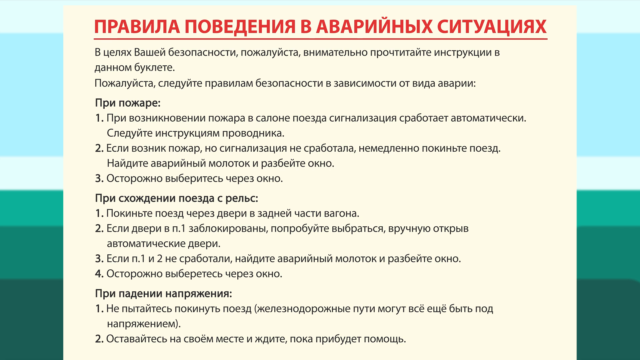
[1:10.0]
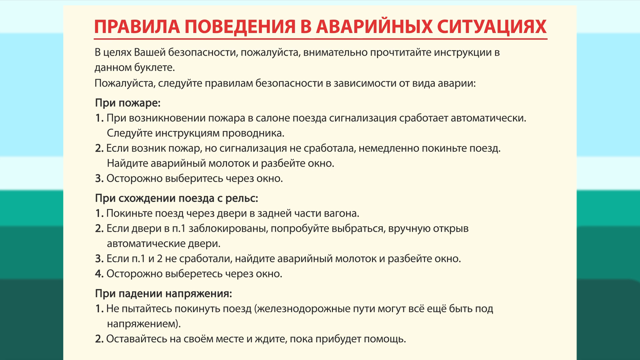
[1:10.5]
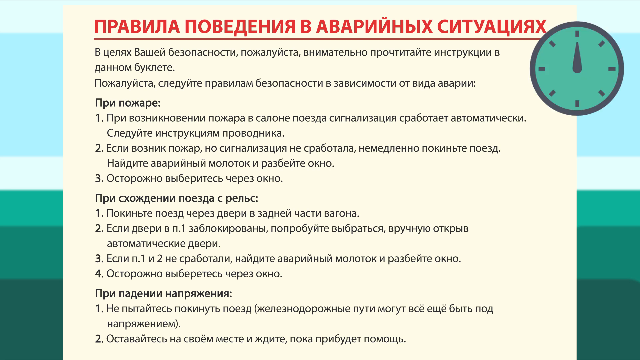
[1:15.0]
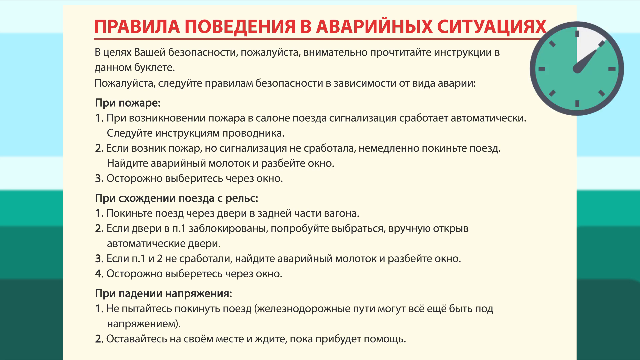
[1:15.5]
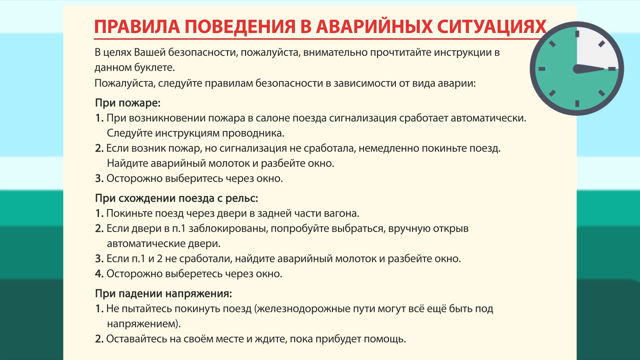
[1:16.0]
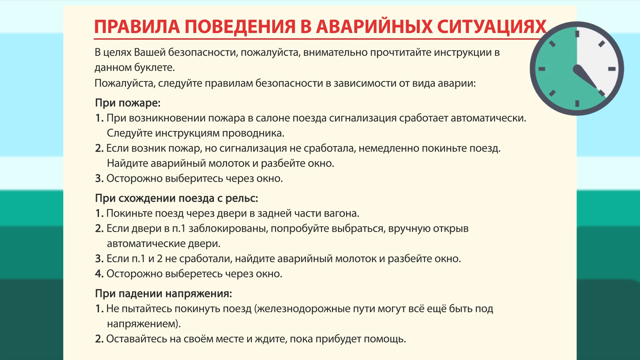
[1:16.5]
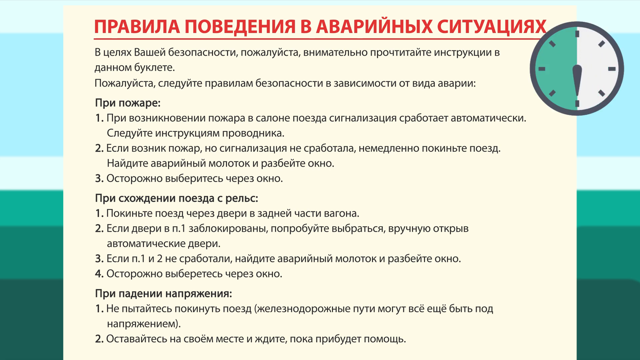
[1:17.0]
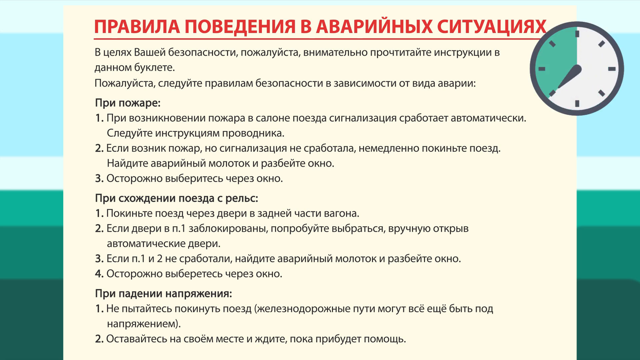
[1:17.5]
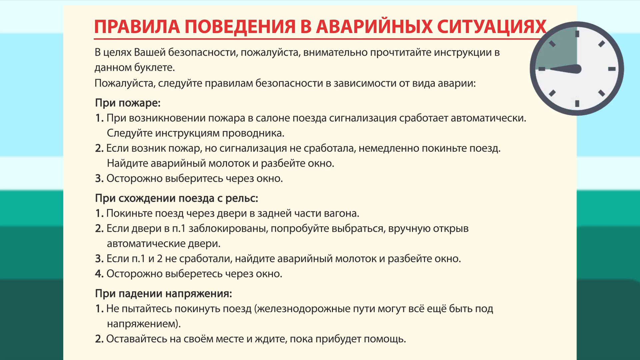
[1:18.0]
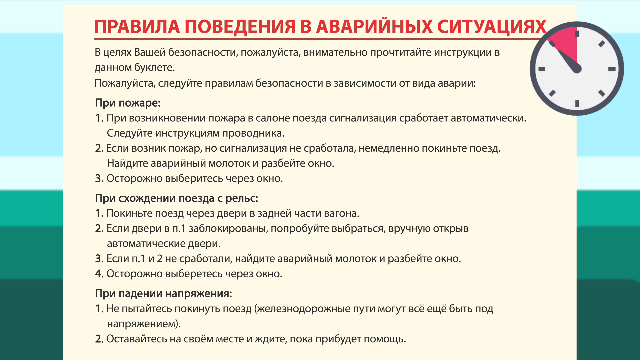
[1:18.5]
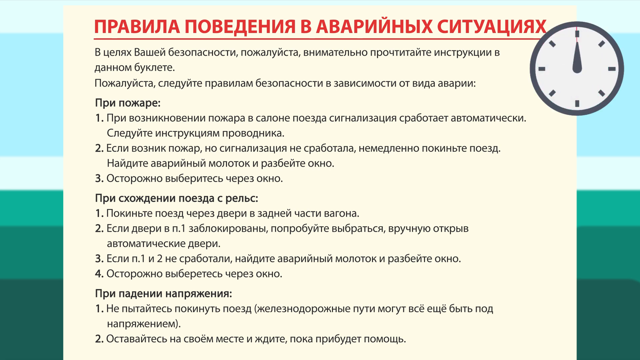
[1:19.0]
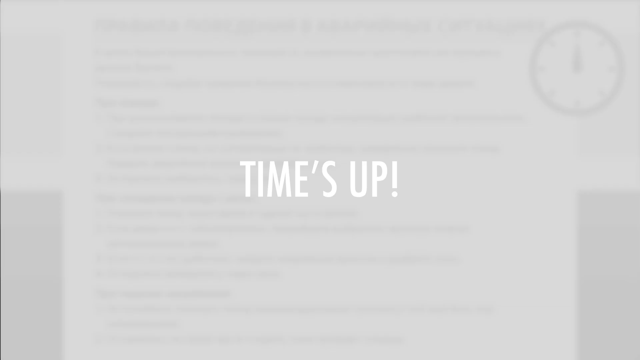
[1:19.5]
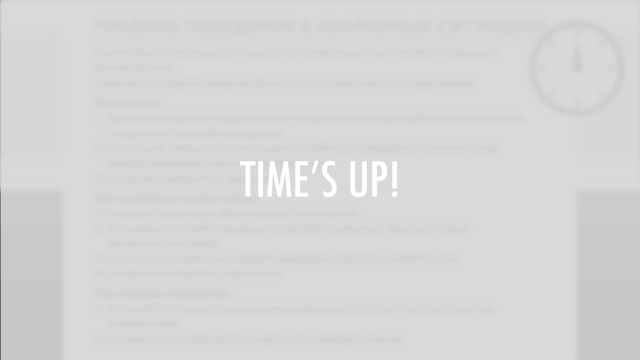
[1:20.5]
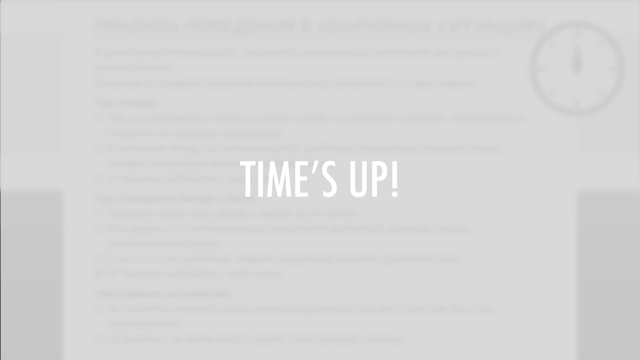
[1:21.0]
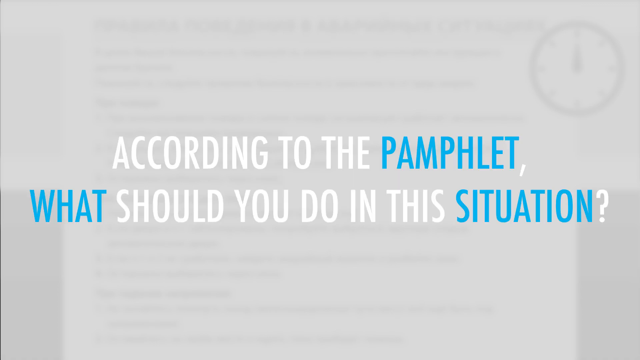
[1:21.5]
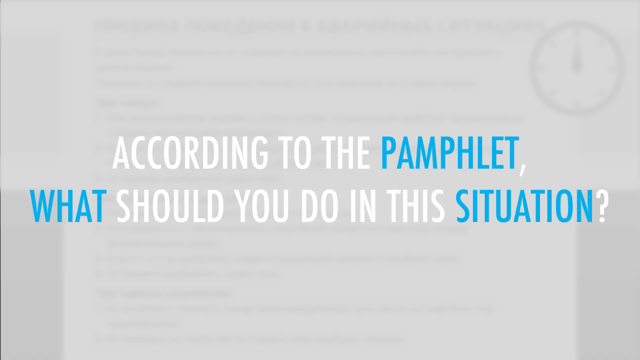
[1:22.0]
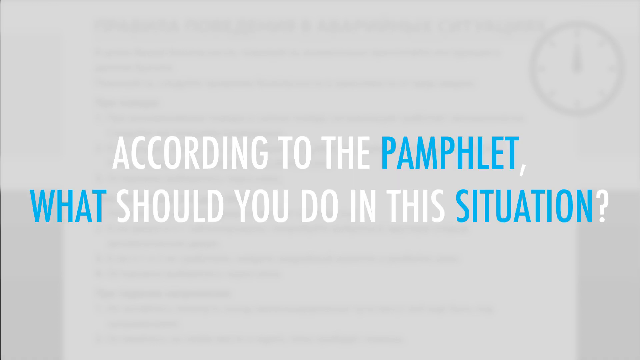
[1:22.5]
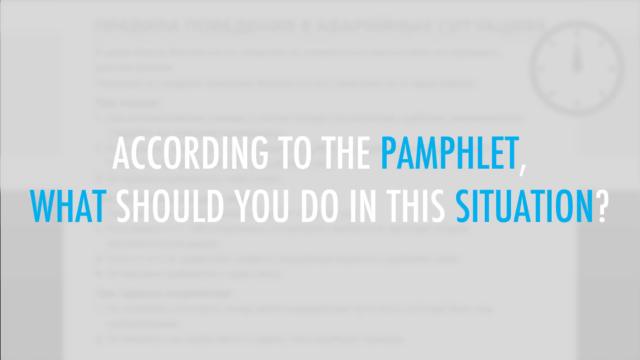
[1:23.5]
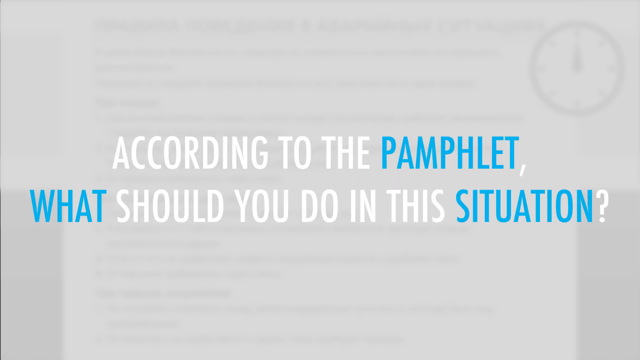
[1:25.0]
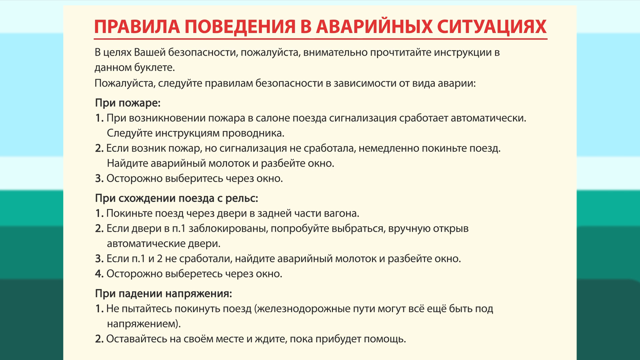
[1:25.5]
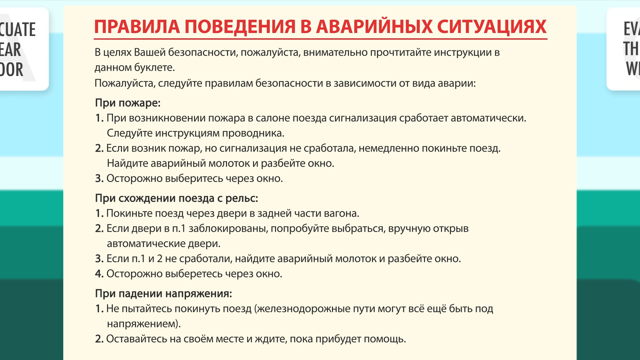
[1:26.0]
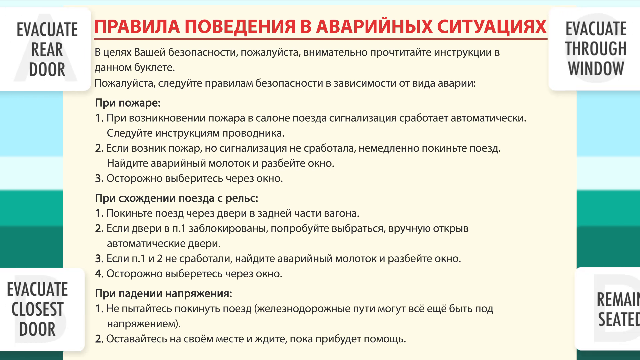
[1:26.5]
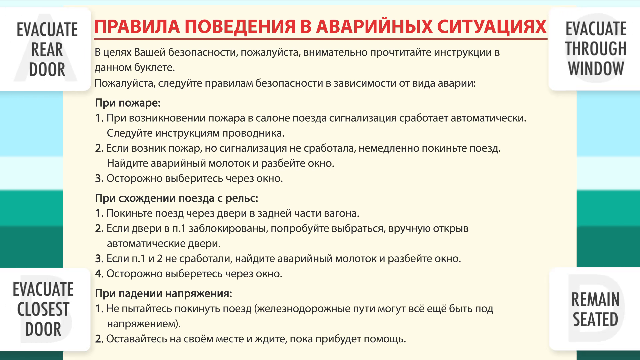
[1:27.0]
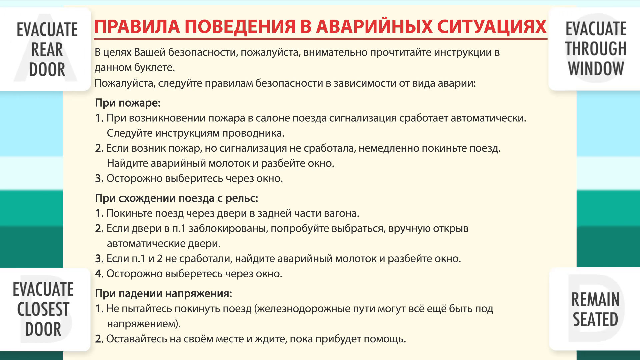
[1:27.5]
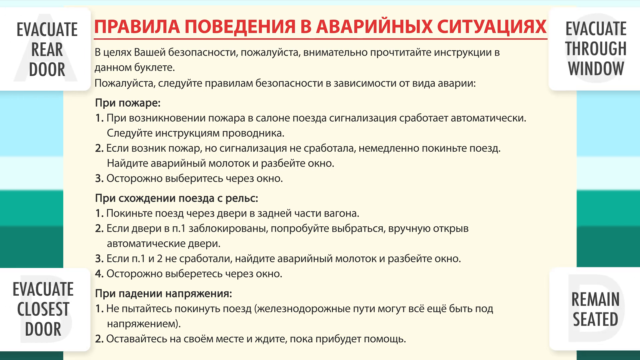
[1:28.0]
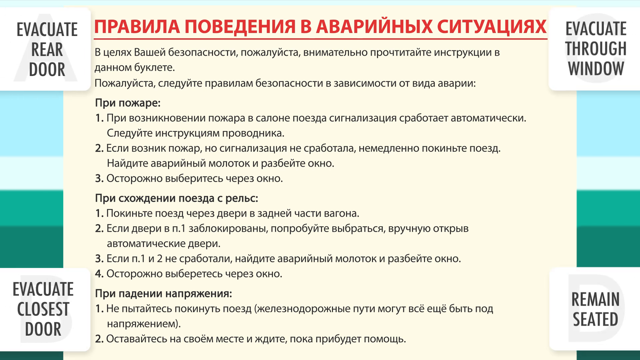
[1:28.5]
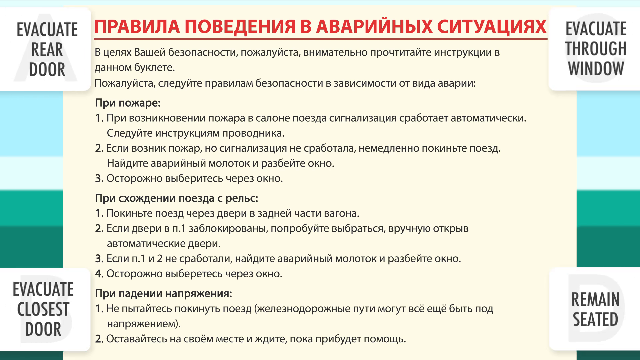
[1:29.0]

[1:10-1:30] The heading of the page is written in red and underlined with a red line. A passage underneath the heading is an explanation. There are three subheadings within the text: the first has three options, the second has four points, and the last has two points. The background is a shift of different colors: a light turquoise band of small width, a turquoise band of much larger width, a light turquoise band the same width as the first, a much darker turquoise band the same width as the third, a darker turquoise band wider than the third but narrower than the second, and a dark turquoise band the same width as the second. A clock appears above the page at the top right of the screen, counting down a period of time. It starts colored turquoise, and when only a fourth of the time remains it changes to red as the time runs out. When the time runs out, a pop-up appears in front of a green box; it has a gray background with white text that says "times up!" The question "according to the pamphlet, what should you do in this situation" then returns above a gray background. The video then transitions back to the form, now with English writing on all four corners of the page.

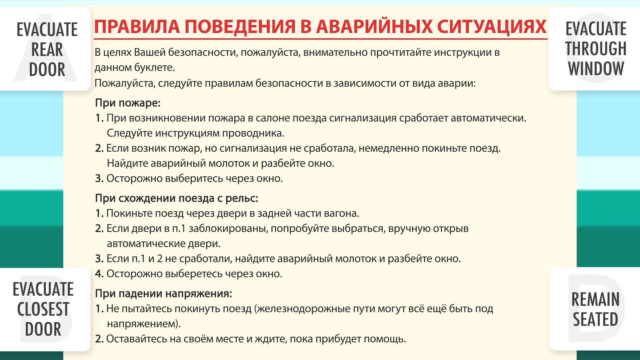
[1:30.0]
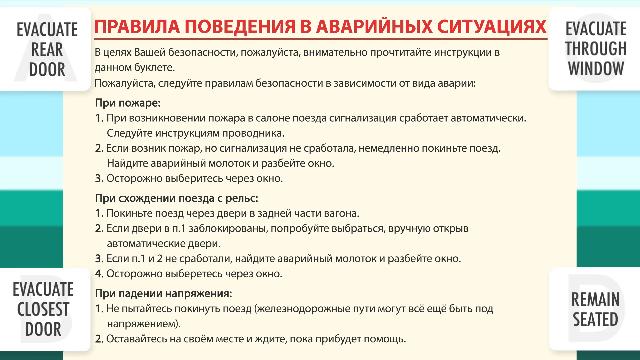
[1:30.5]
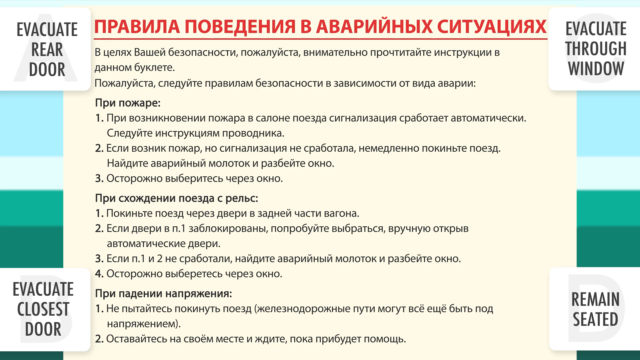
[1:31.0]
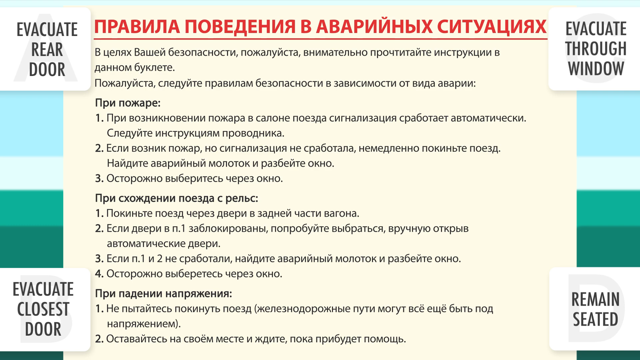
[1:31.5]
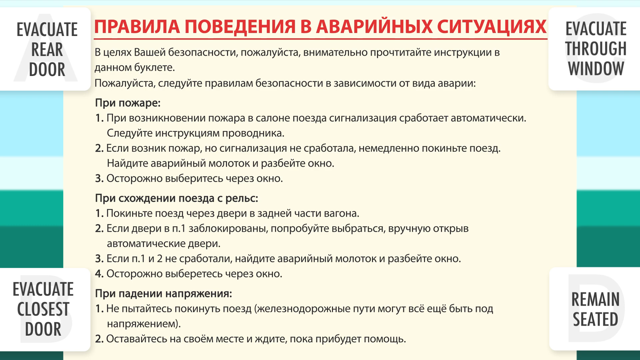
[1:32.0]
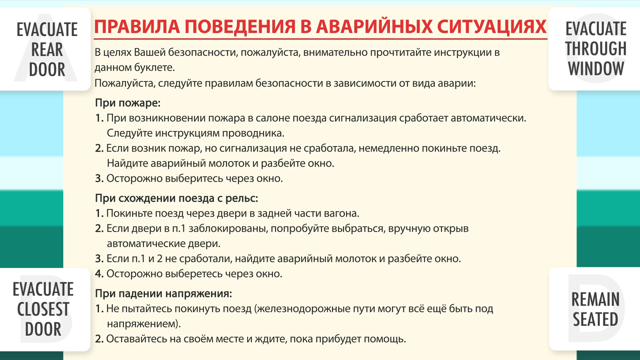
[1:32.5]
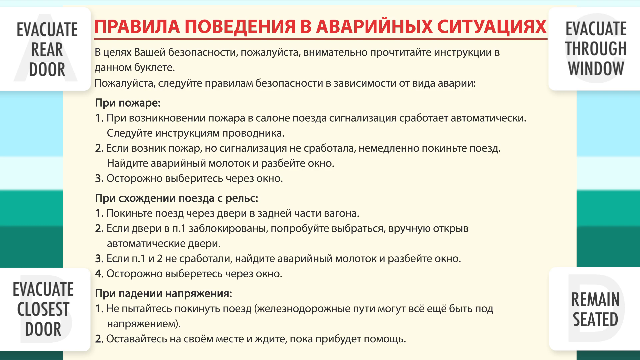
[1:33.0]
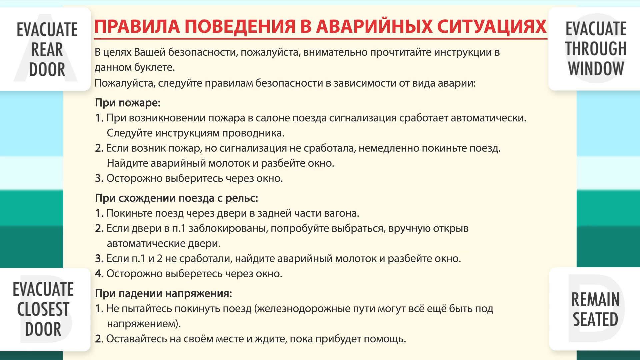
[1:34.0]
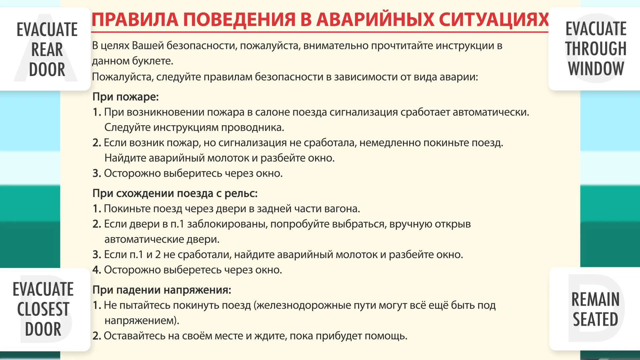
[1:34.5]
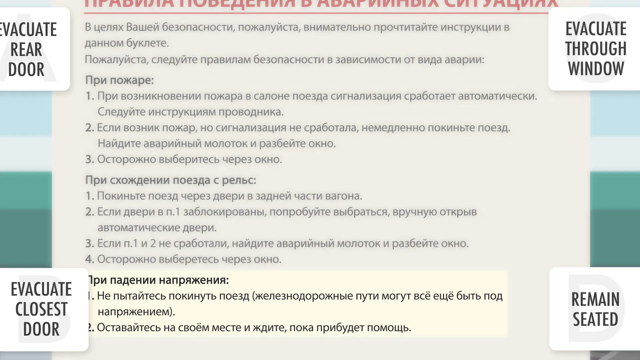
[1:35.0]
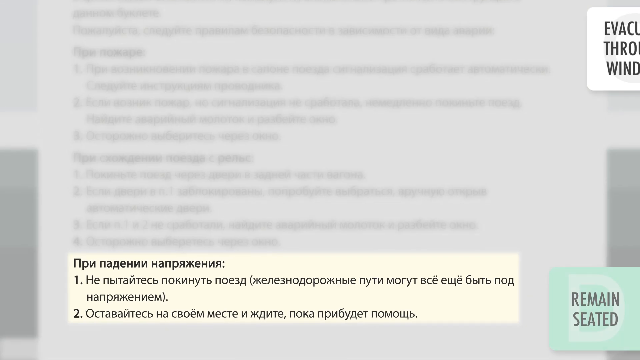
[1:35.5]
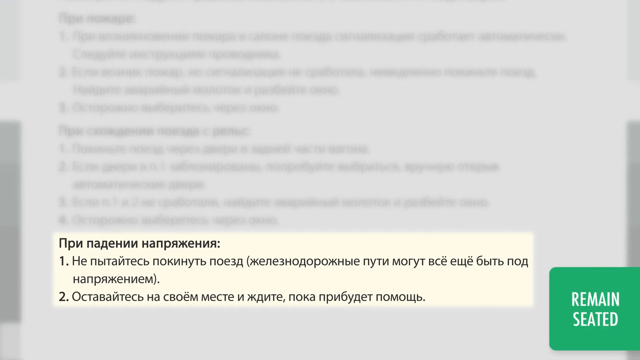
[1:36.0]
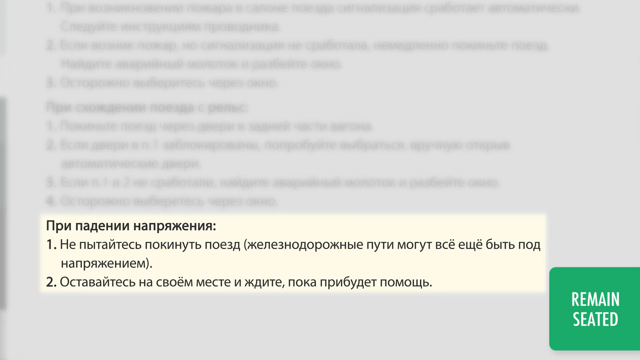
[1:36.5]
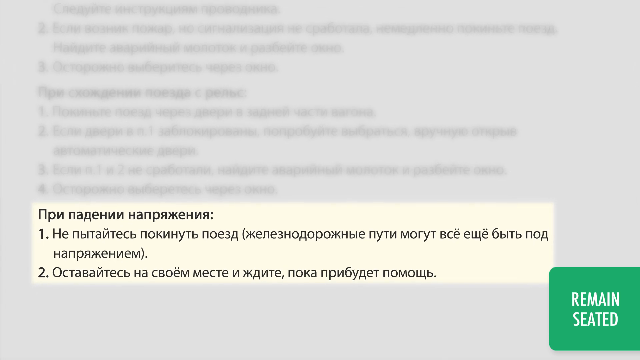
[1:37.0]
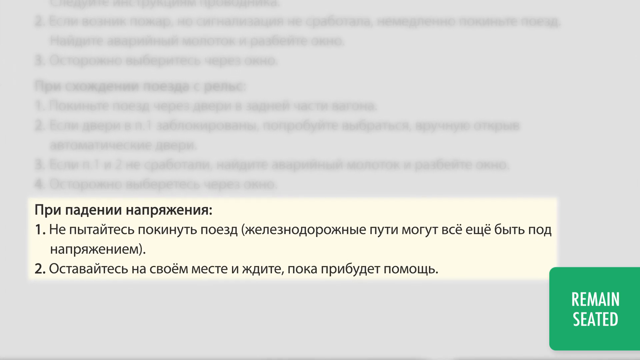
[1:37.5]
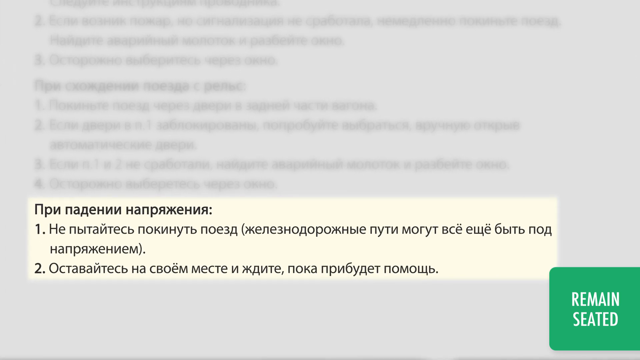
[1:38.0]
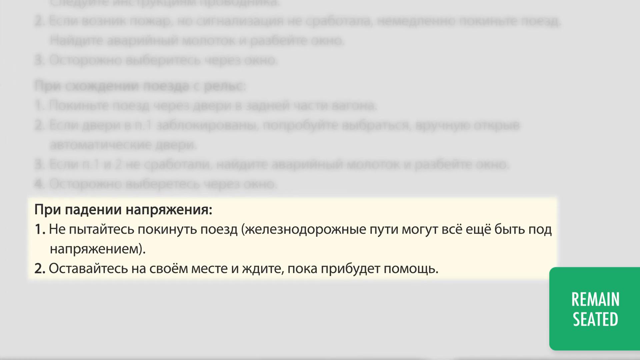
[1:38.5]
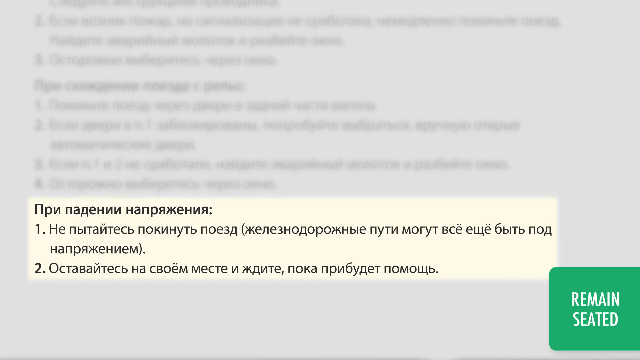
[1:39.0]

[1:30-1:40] A page written in Russian has a red heading underlined with a red line and black writing throughout, with three subheadings: the first has three points, the second has four points, and the third has two points. Four blocks of English writing are on the four corners. On the top left, "evacuate rear door" is written in dark black with the letter A in gray behind it. On the bottom left, "evacuate closest door" is in dark black with light gray behind it. On the top right, "evacuate through window" appears with a light gray C behind it and with a light gray D behind it. On the bottom right, "remain seated" is written in dark black. The video then zooms into the page, highlighting the third subsection, which has two points. All the corner texts disappear except the one on the bottom right, "remain seated", which is highlighted in green, showing that it is the correct answer to the question.